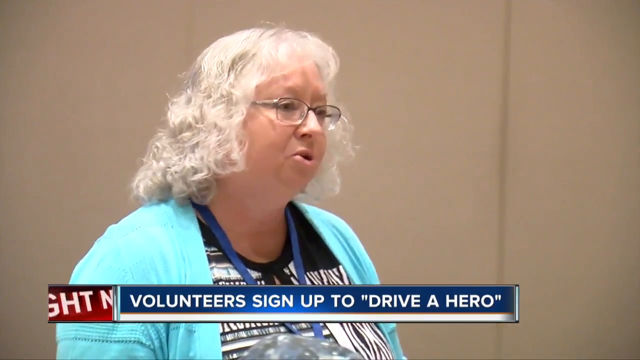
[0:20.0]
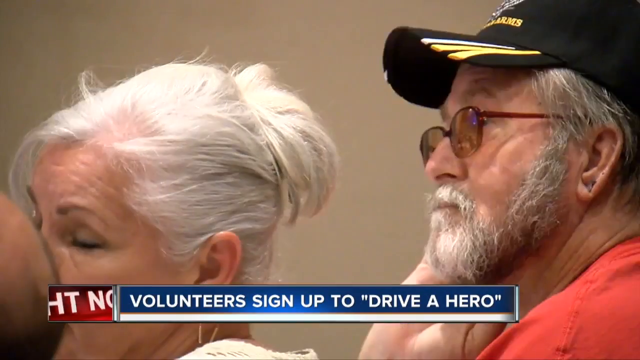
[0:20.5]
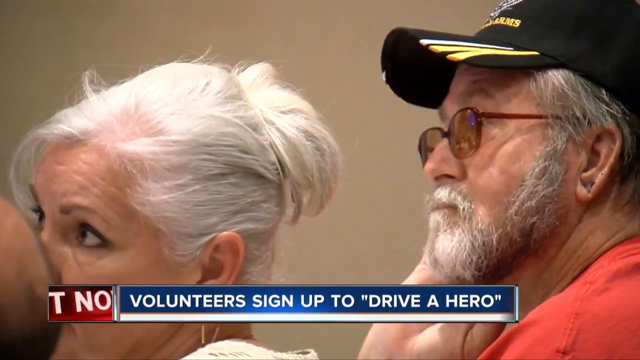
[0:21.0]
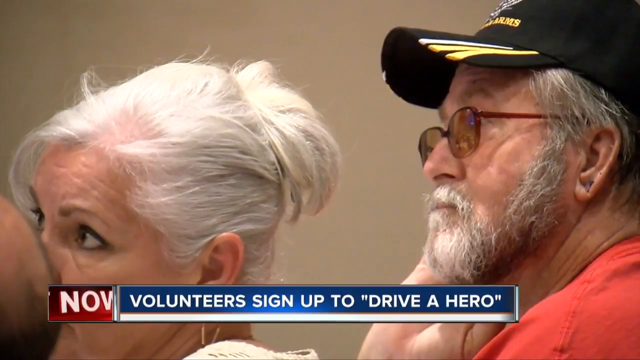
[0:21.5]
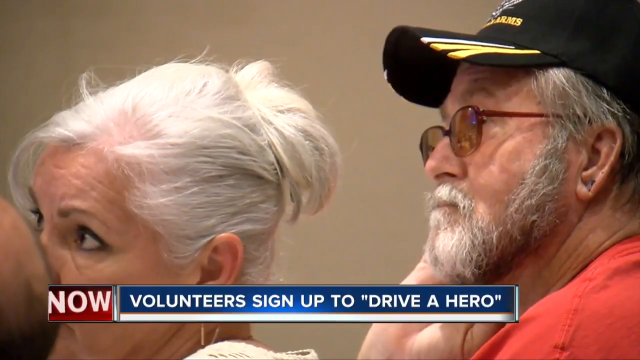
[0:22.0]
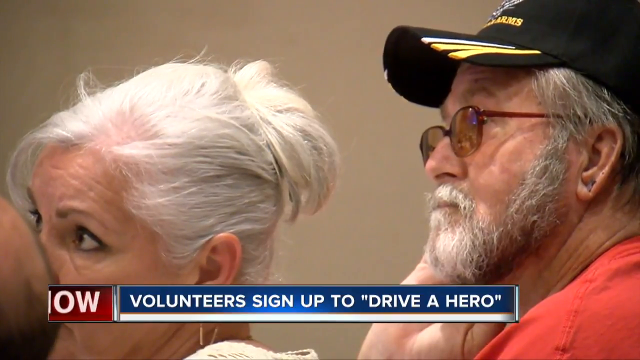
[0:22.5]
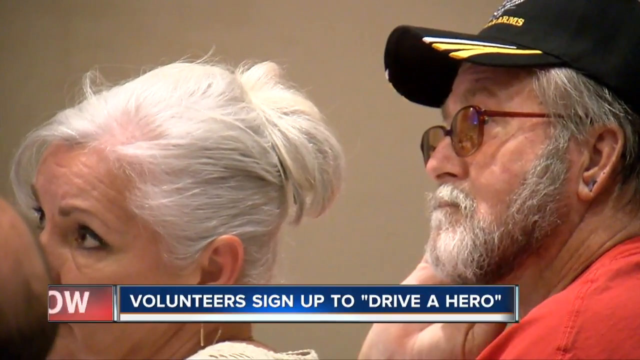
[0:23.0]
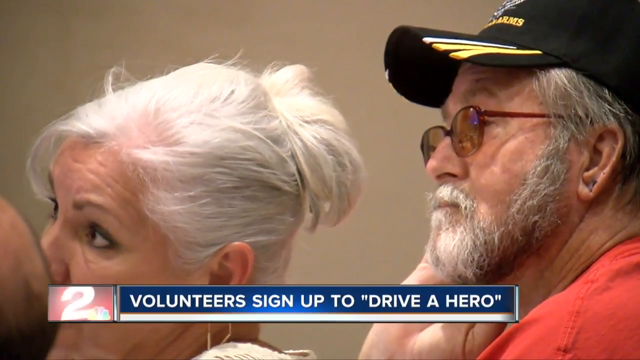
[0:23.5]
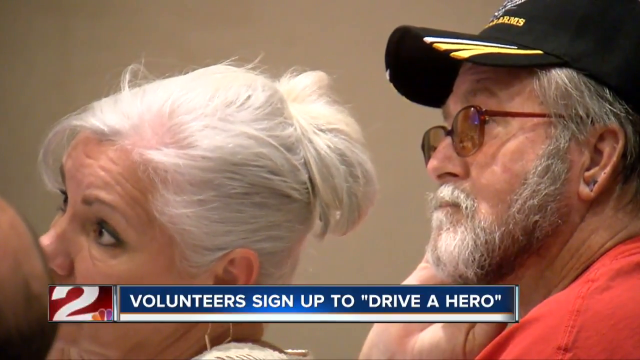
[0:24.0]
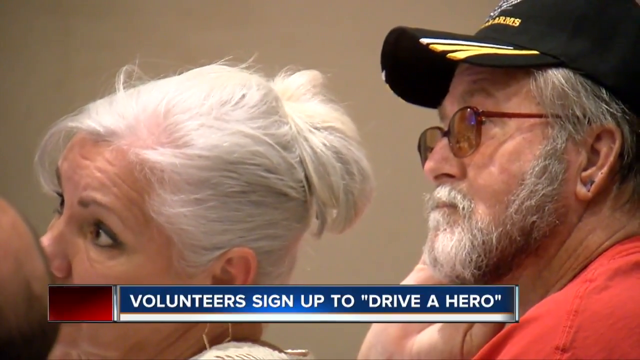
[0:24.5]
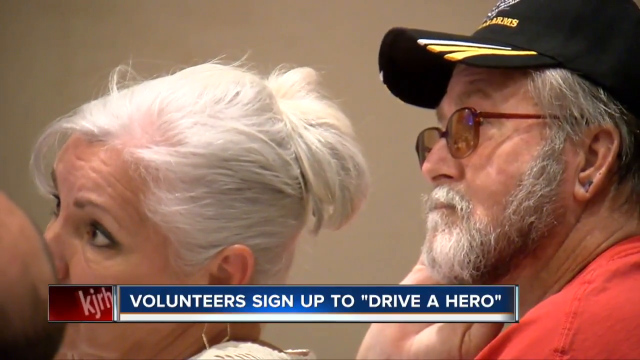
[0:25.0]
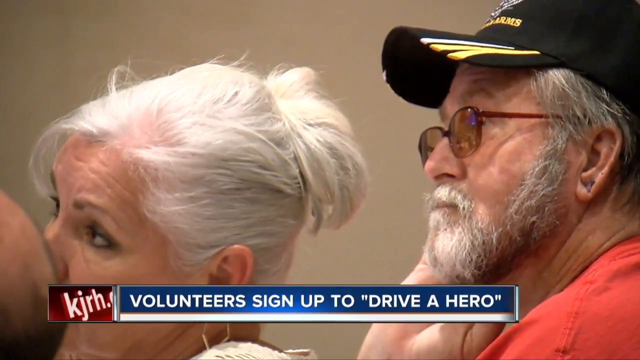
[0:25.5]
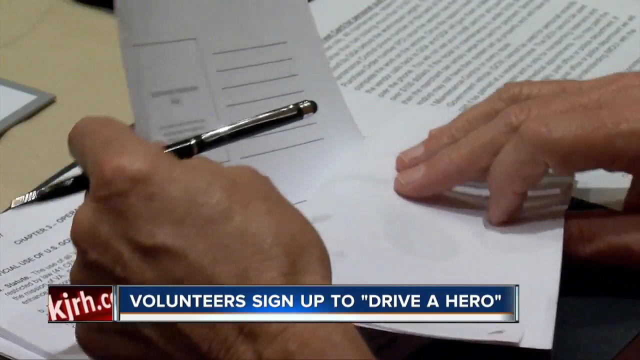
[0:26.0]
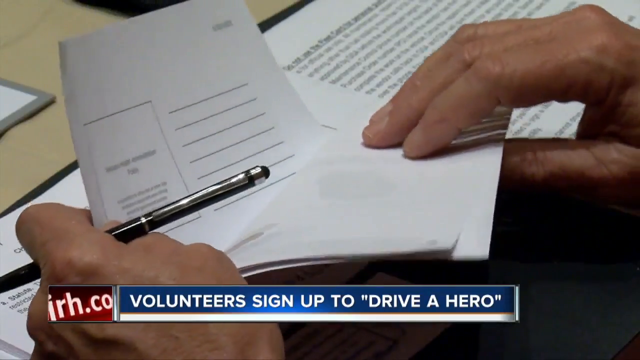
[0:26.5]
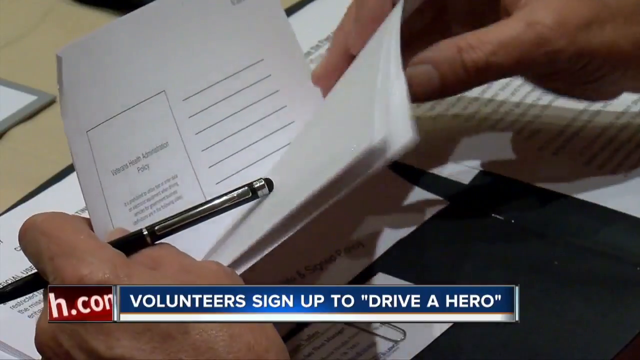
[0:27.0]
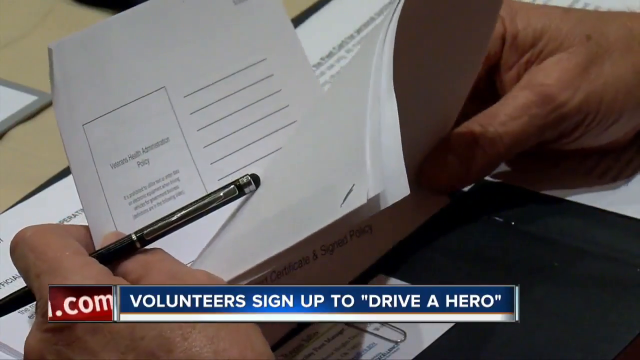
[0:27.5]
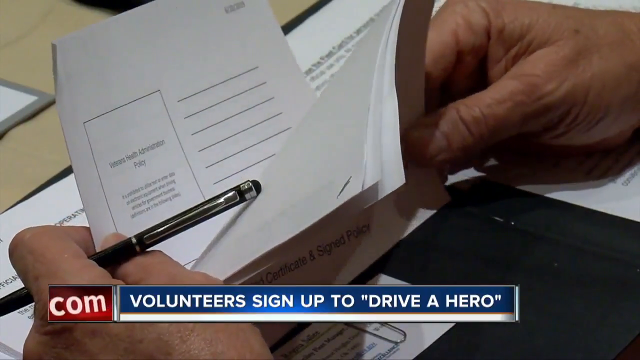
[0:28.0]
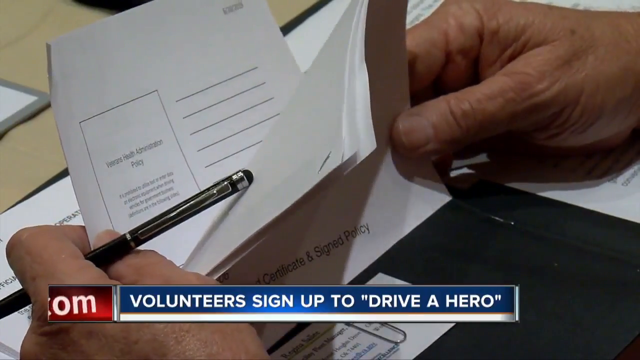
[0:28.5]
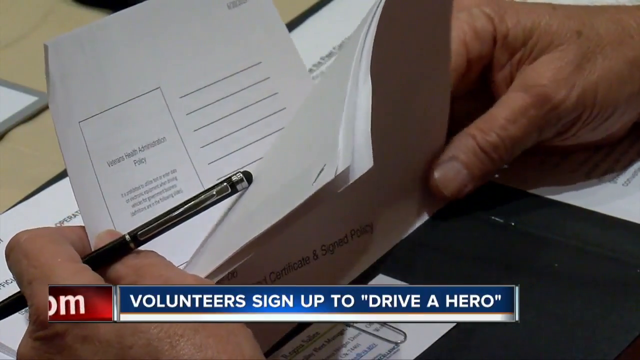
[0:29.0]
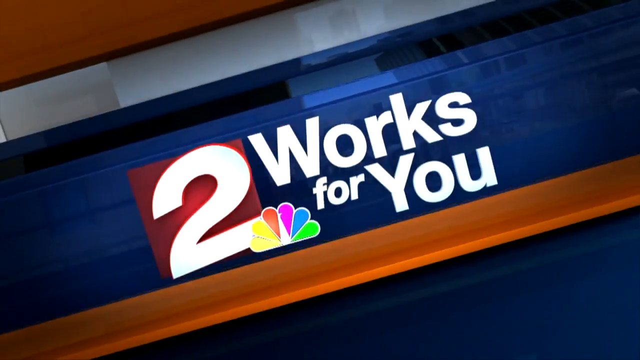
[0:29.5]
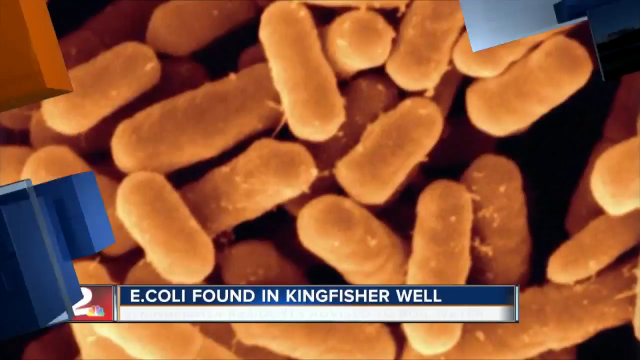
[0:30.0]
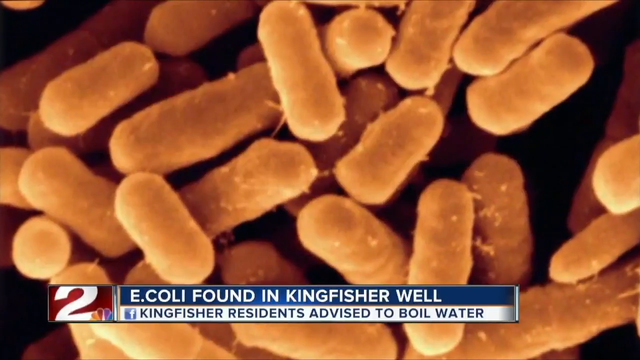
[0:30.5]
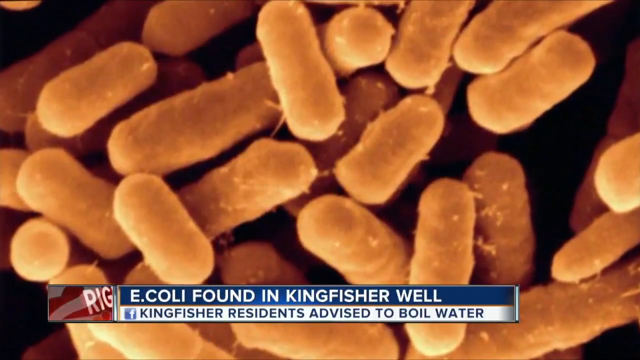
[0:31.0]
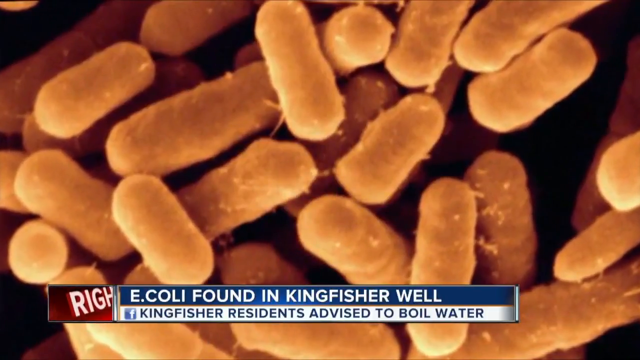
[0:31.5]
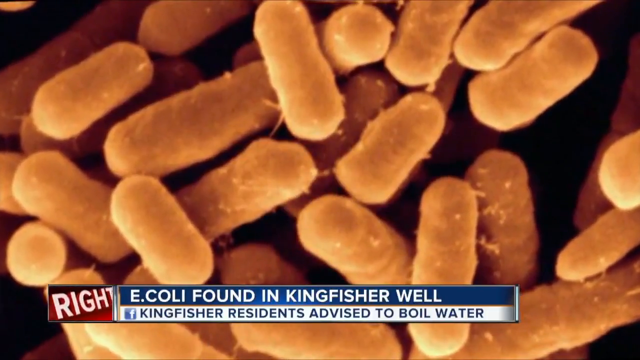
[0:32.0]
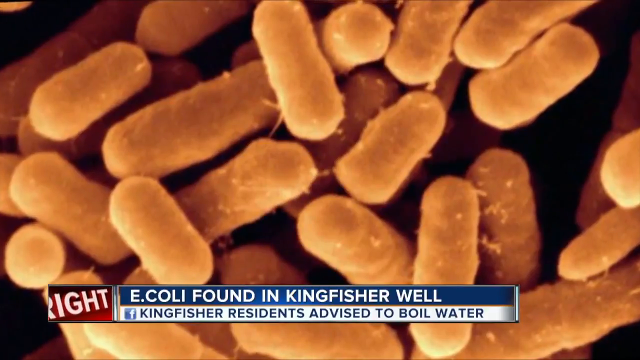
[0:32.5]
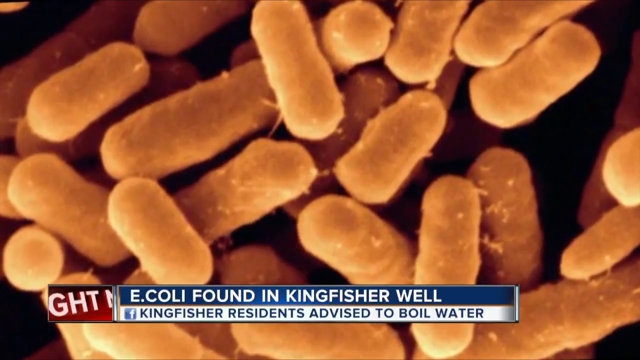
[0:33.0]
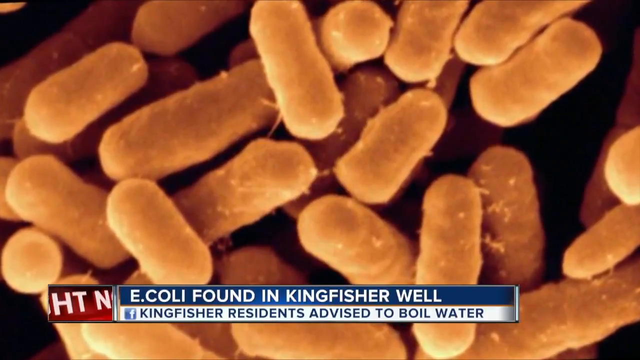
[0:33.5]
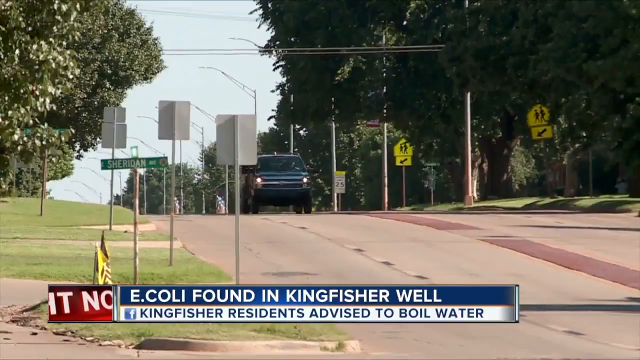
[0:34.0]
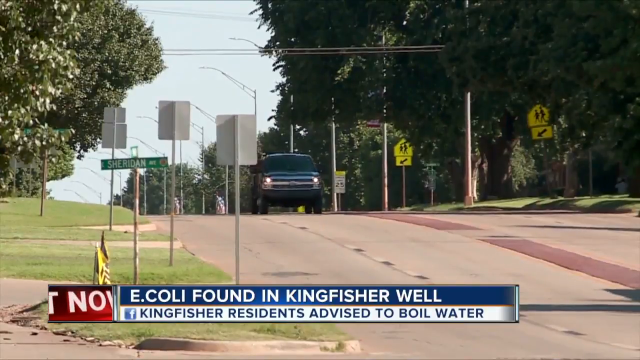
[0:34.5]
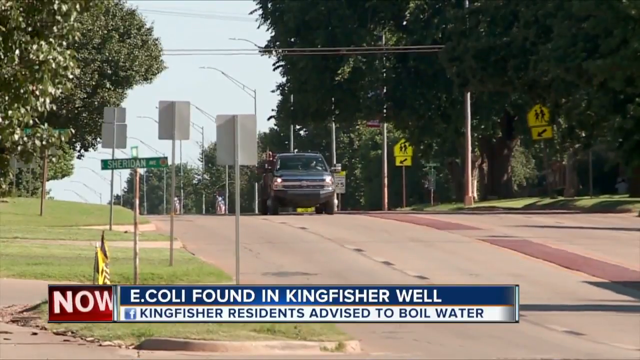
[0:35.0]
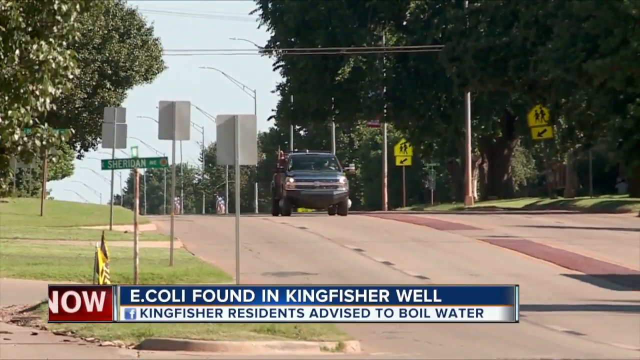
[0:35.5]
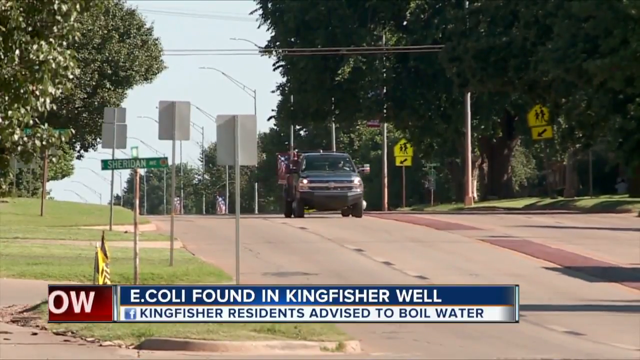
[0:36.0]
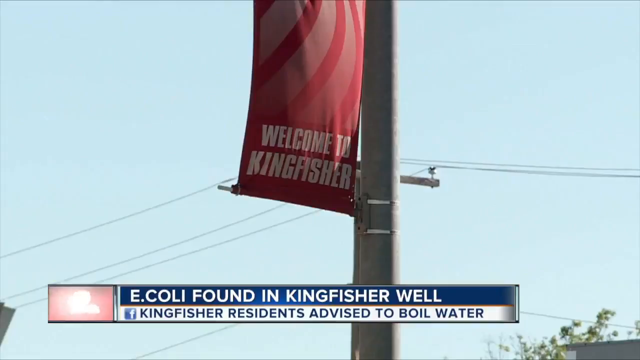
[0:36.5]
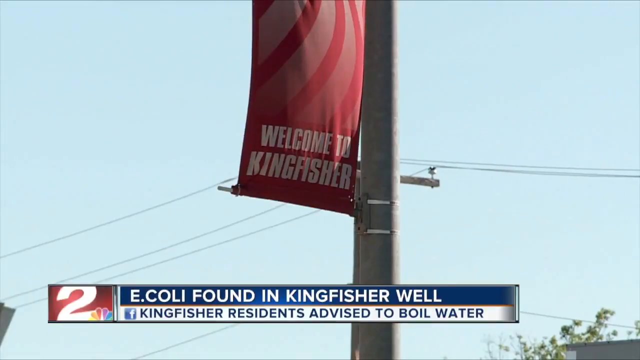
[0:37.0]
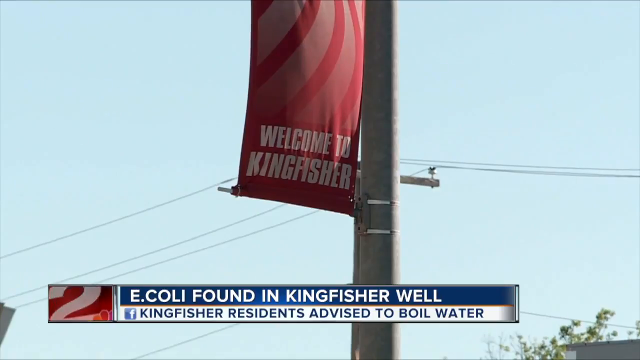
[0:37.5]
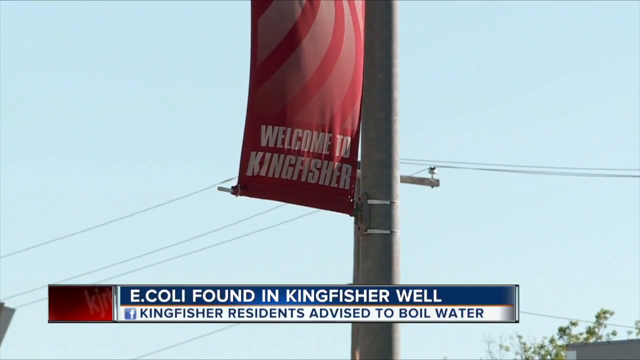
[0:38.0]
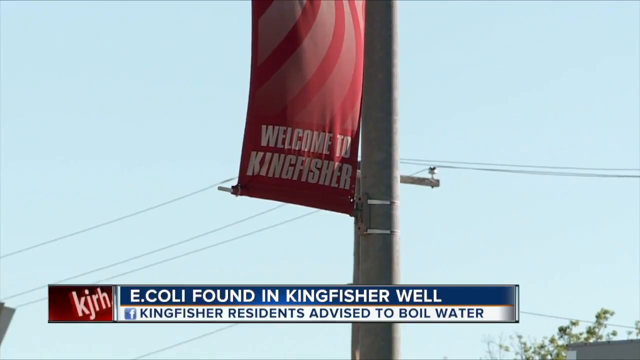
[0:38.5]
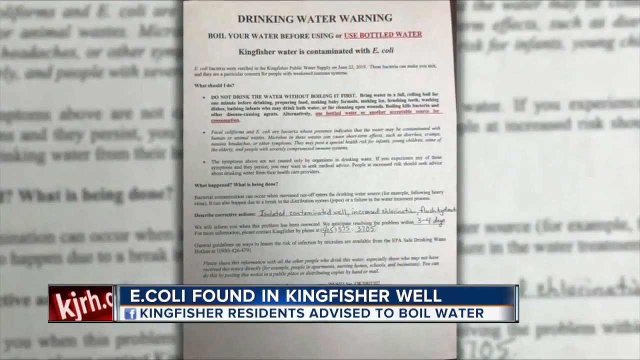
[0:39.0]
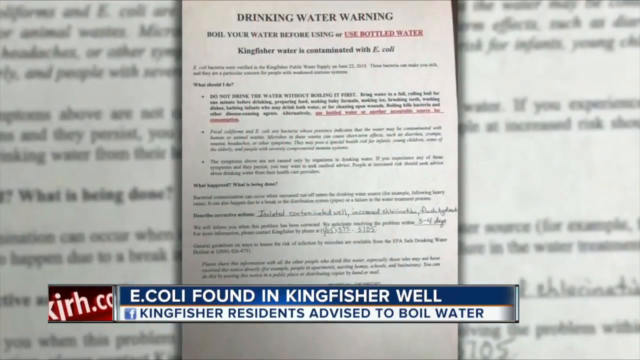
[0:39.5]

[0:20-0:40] The woman with curly gray hair and the teal cardigan speaks to the room. A close-up shows an older man on the right with a short gray beard and gray hair, wearing a black ball cap, glasses and a red t-shirt. Next to him is a woman in her 60s with white-gray hair pulled up in a clip; both listen to the speaker. A close-up shows what is probably the packet of paperwork each person has, with hands sifting through it. The "two works for you" graphic with the NBC logo pops back up.